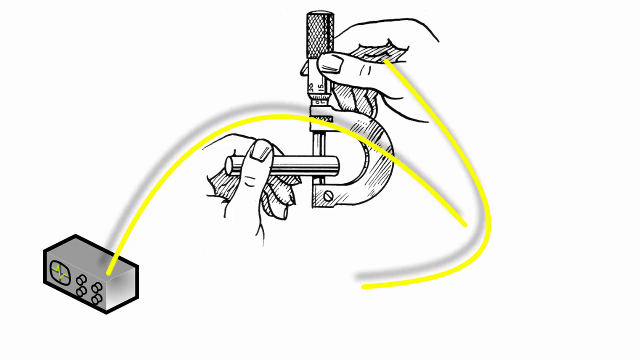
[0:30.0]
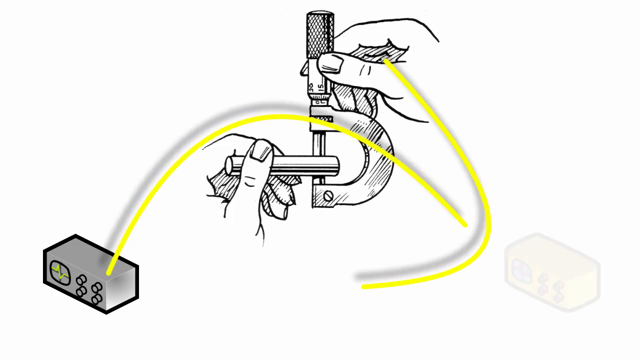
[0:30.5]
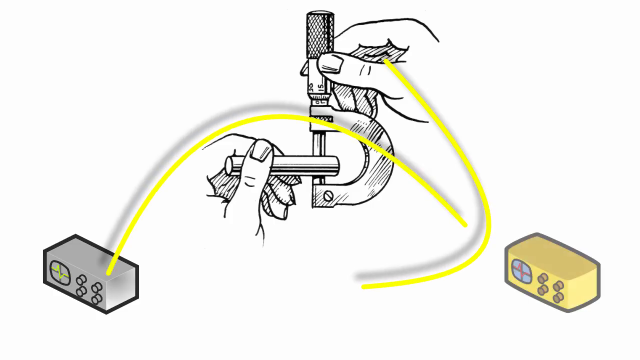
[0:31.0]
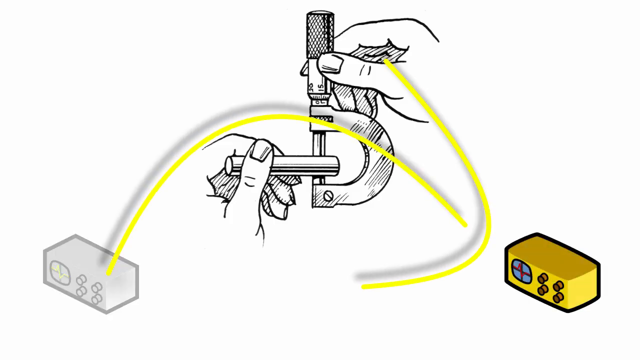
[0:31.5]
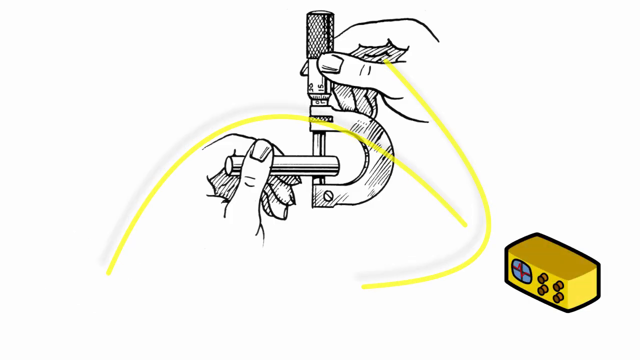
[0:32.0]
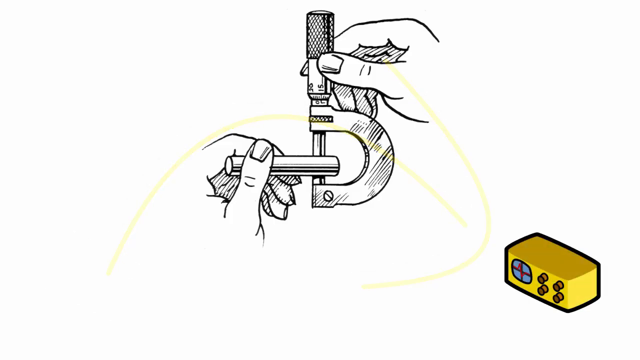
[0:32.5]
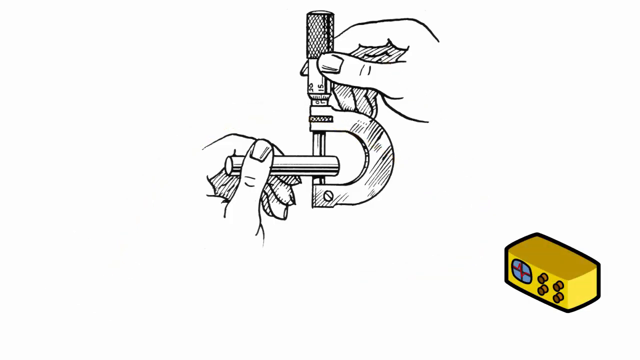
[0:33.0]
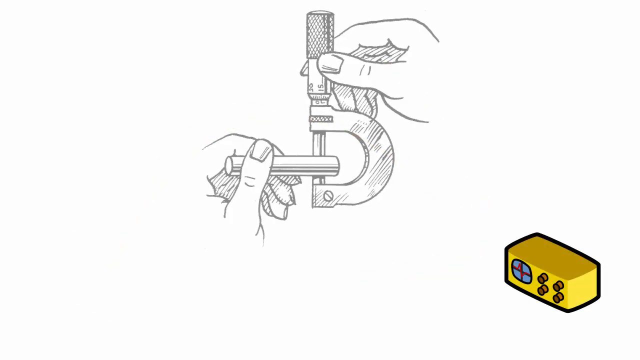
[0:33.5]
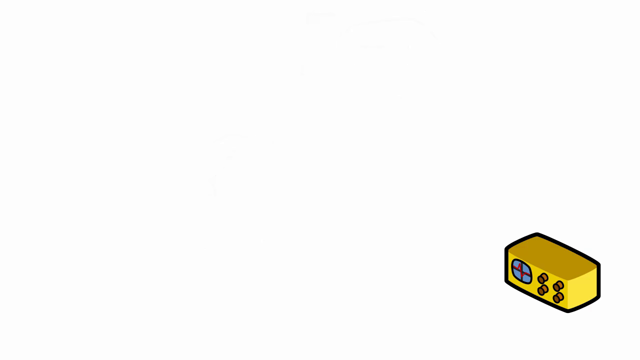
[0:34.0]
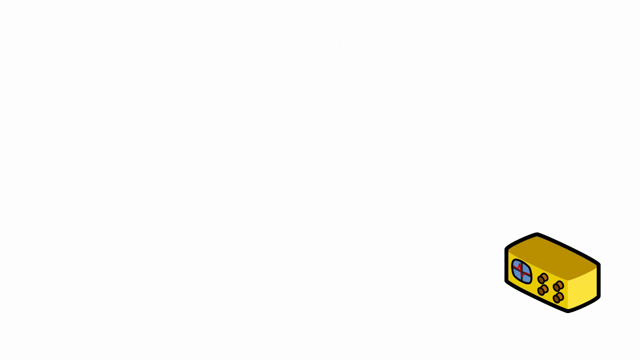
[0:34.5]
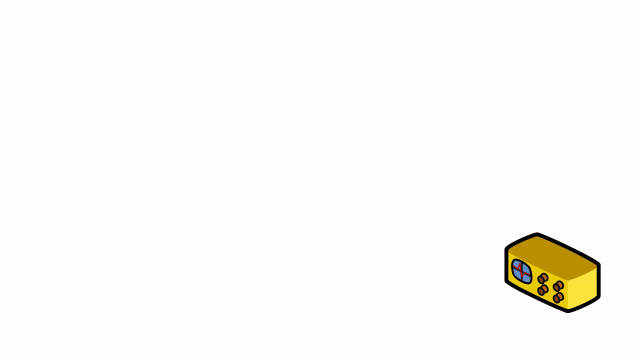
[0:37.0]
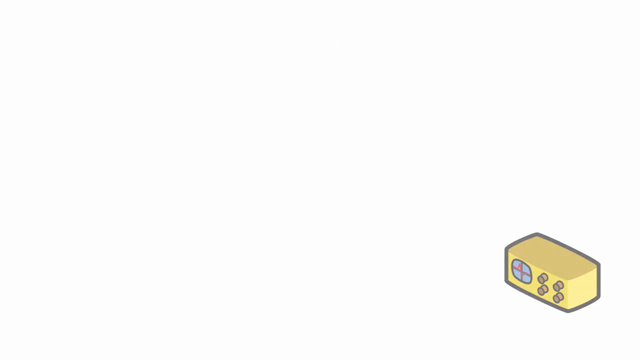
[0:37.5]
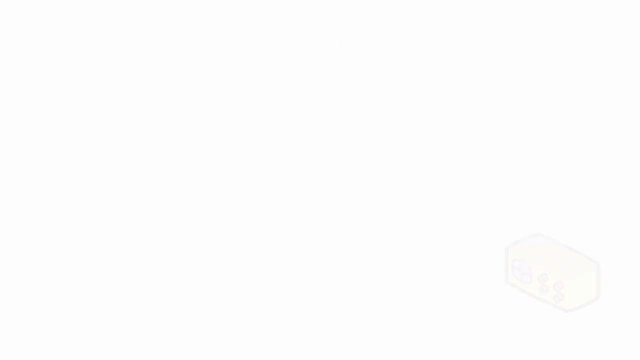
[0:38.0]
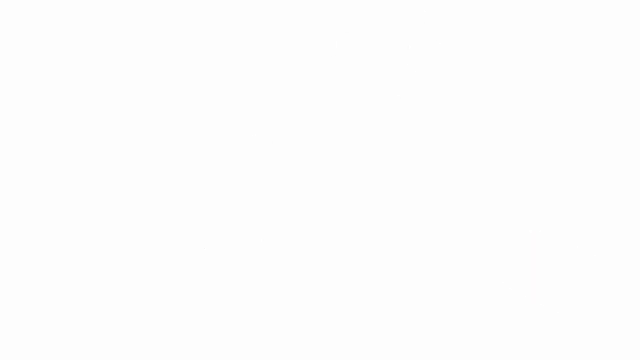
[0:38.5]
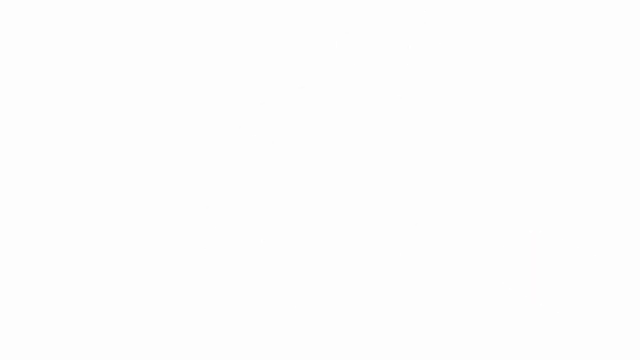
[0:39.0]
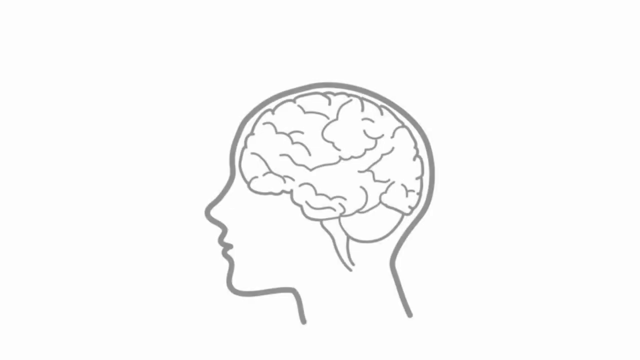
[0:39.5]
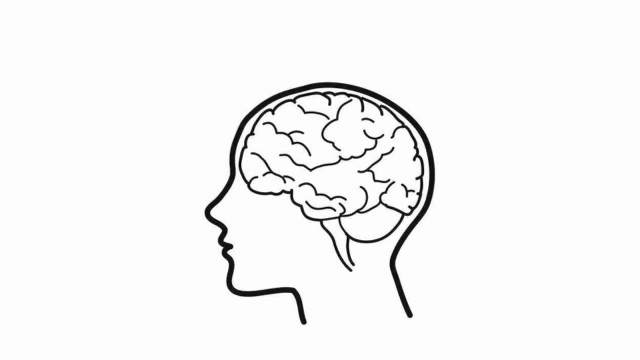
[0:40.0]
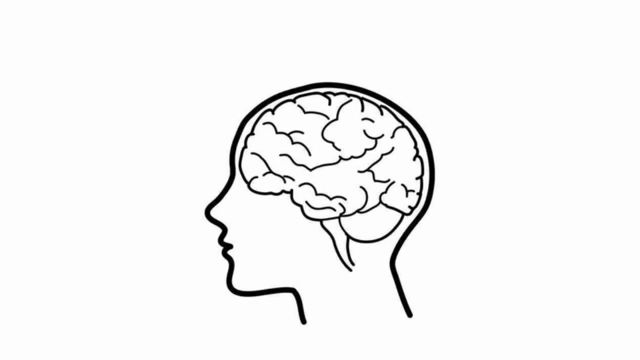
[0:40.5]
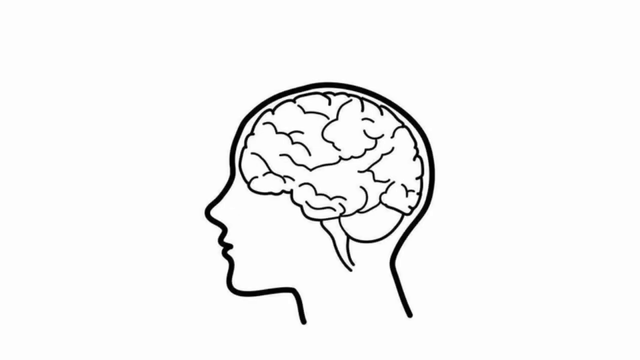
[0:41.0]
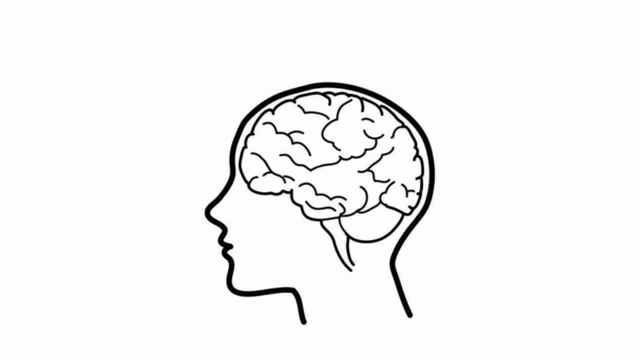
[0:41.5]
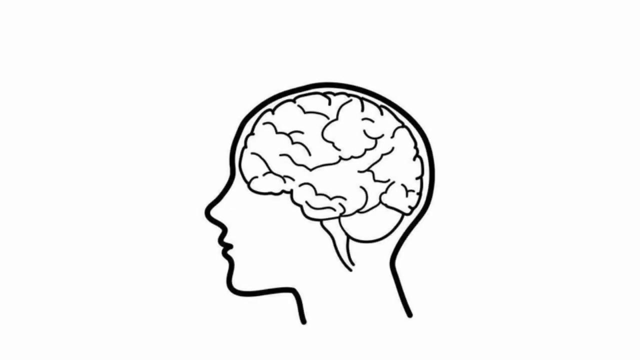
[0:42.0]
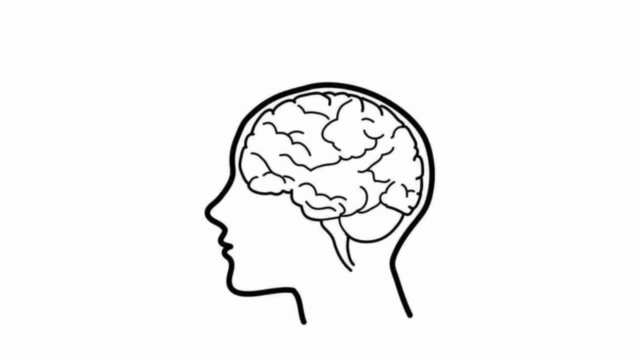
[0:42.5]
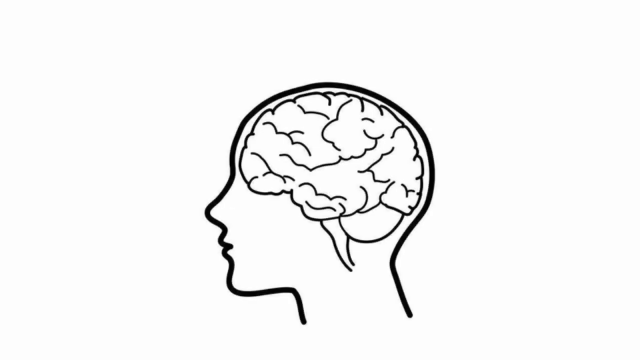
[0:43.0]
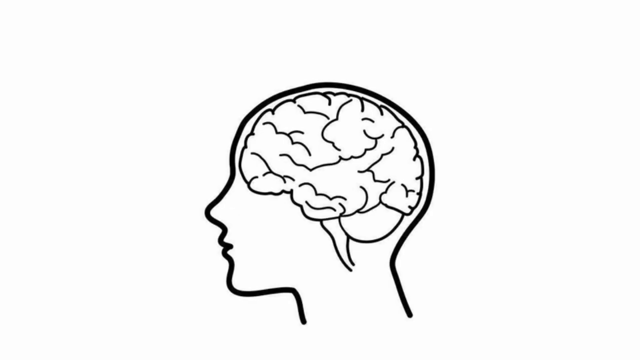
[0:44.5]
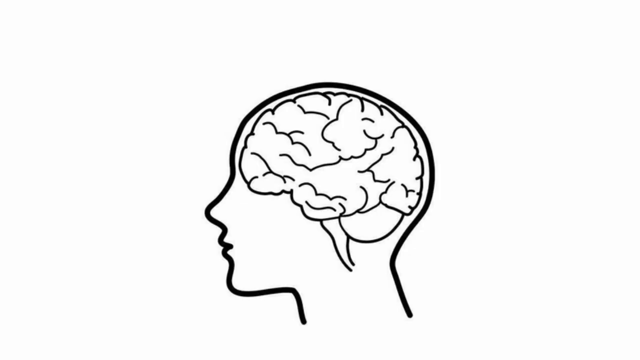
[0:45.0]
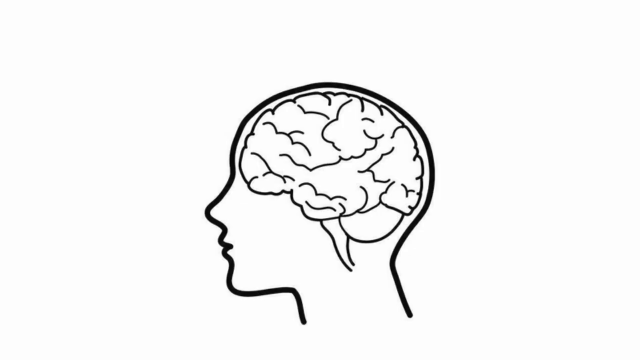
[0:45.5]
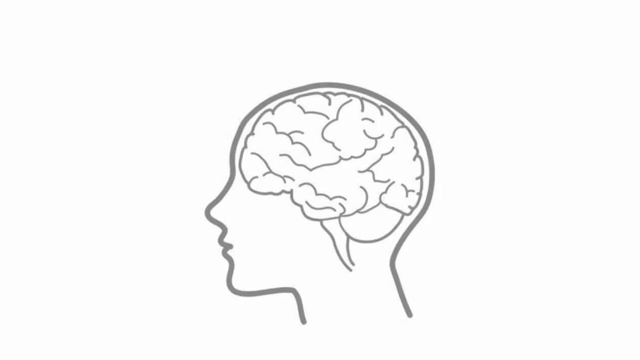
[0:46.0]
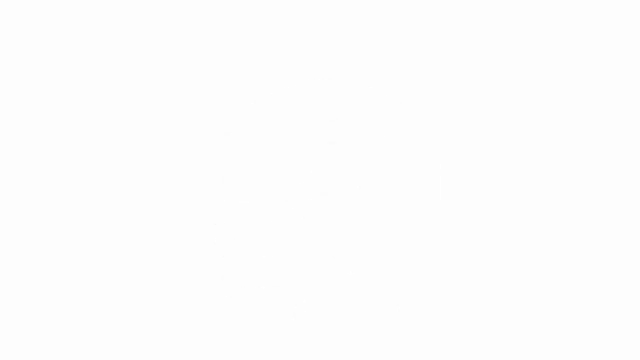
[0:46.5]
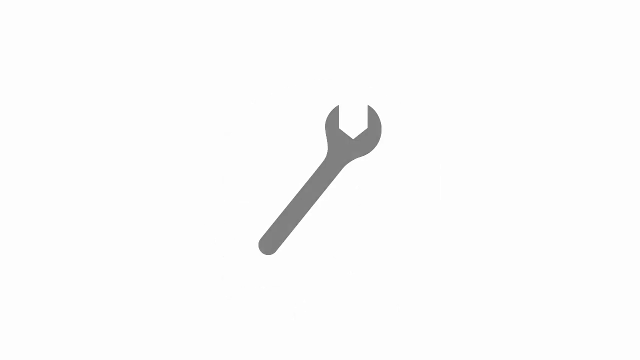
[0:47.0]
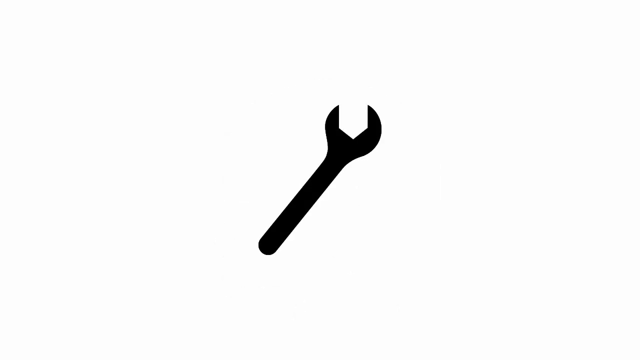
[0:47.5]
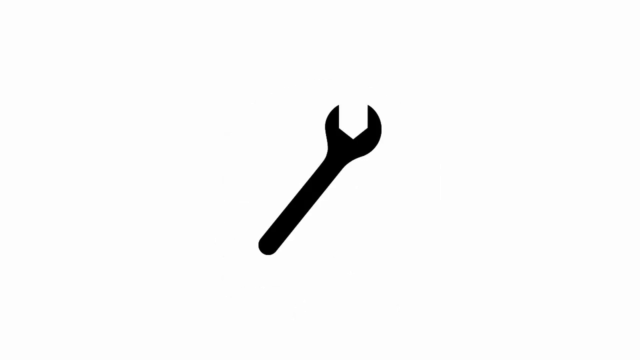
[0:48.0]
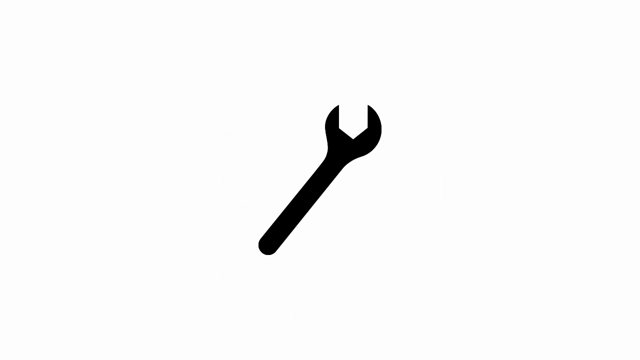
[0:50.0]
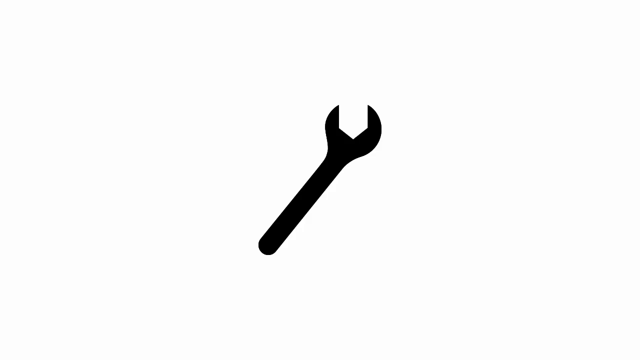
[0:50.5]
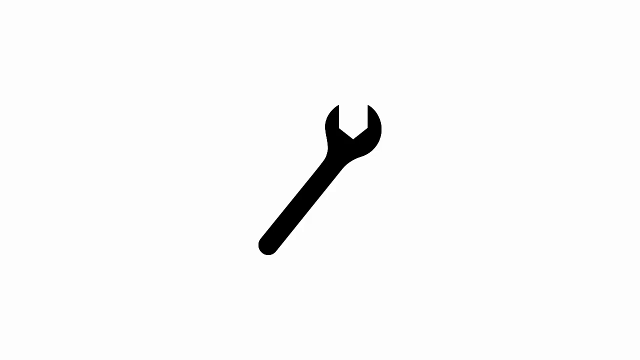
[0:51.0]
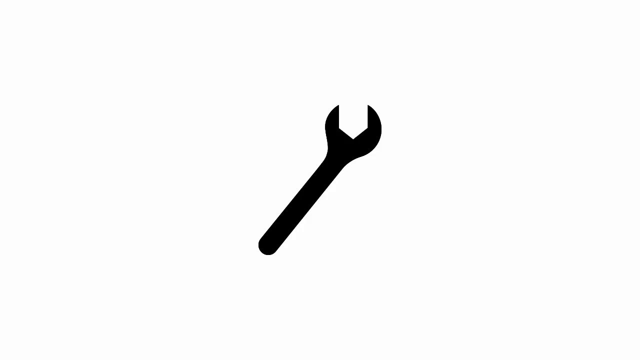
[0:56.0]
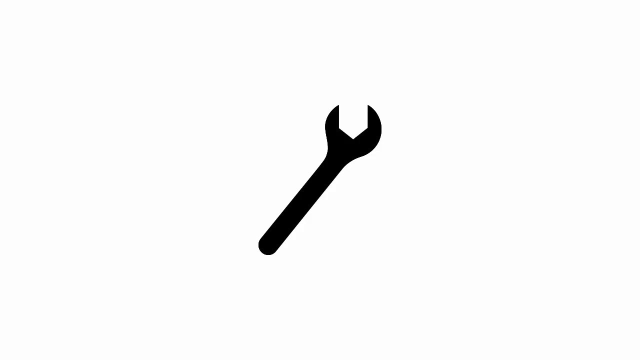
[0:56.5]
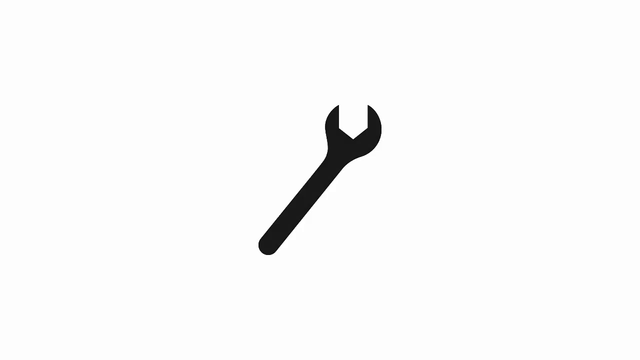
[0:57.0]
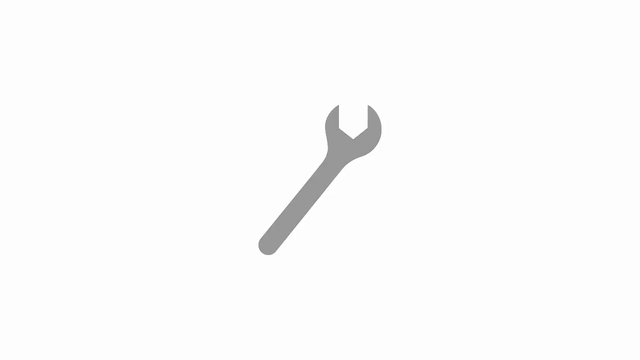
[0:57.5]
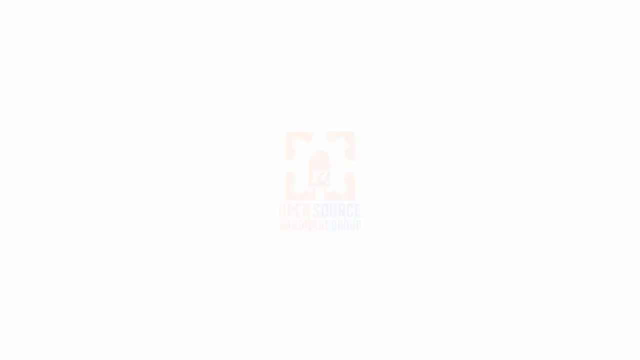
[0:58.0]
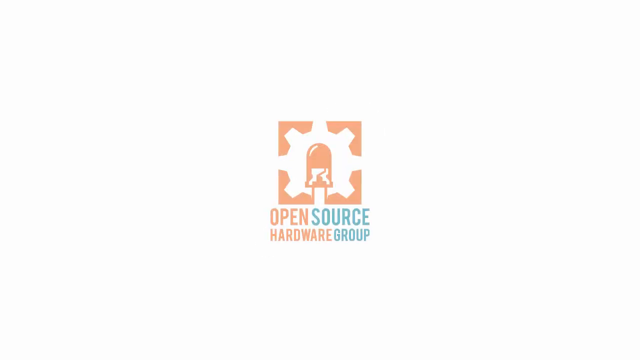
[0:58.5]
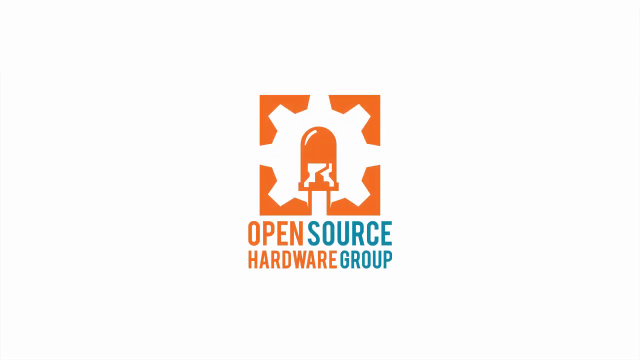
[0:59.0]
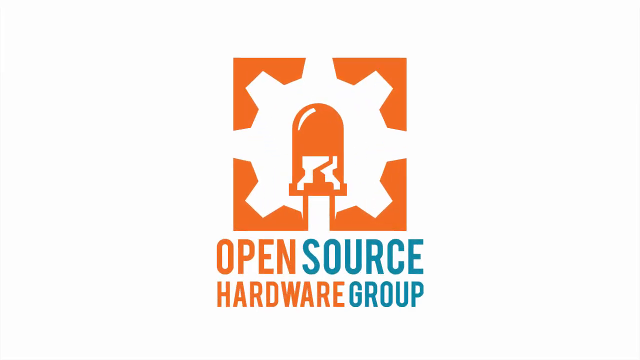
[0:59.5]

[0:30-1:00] The video depicts the brain being used well, coming up with solutions and good ideas and being used to solve problems.